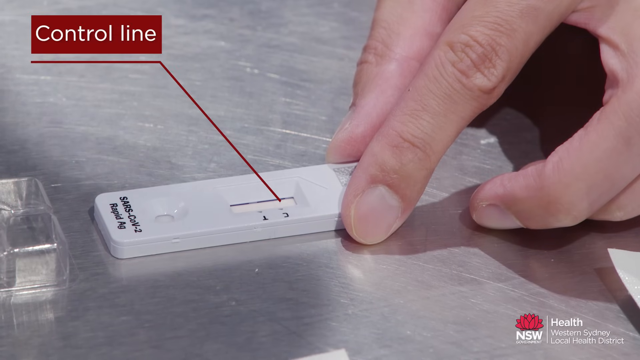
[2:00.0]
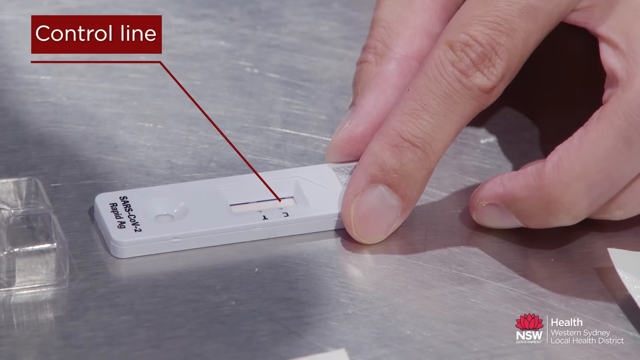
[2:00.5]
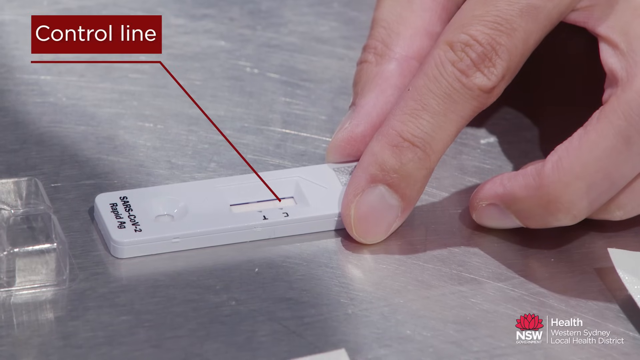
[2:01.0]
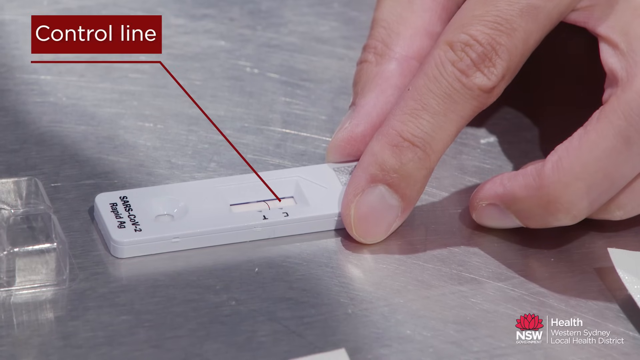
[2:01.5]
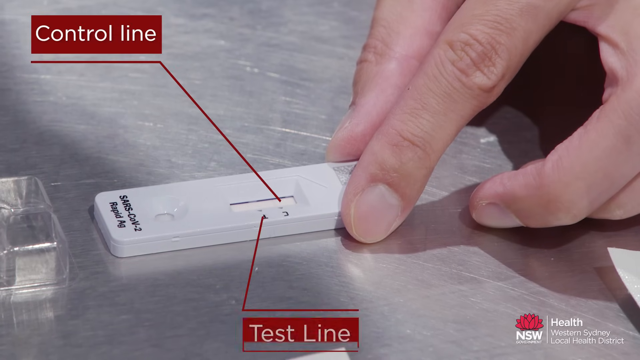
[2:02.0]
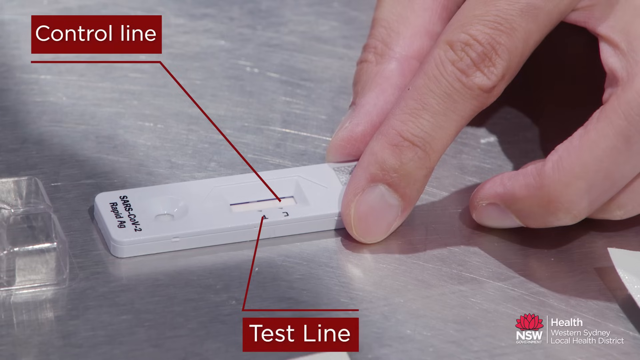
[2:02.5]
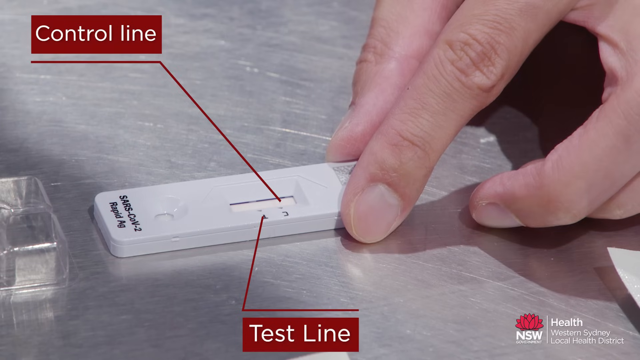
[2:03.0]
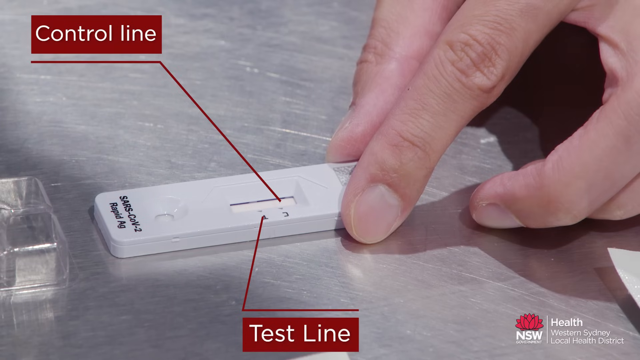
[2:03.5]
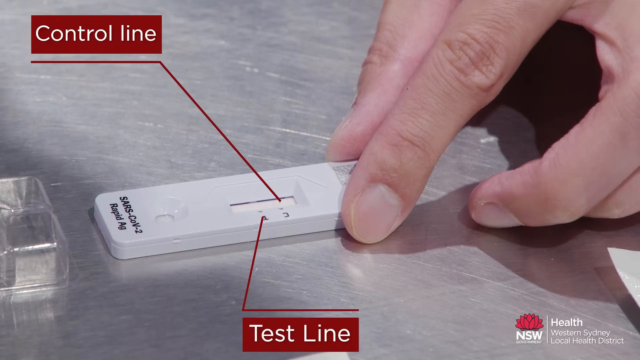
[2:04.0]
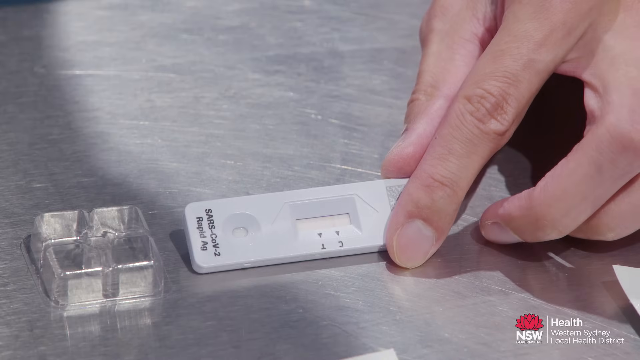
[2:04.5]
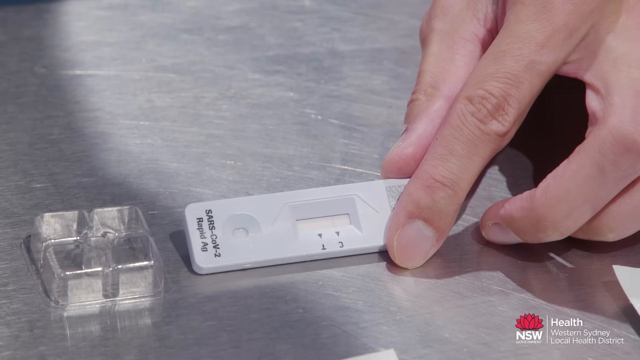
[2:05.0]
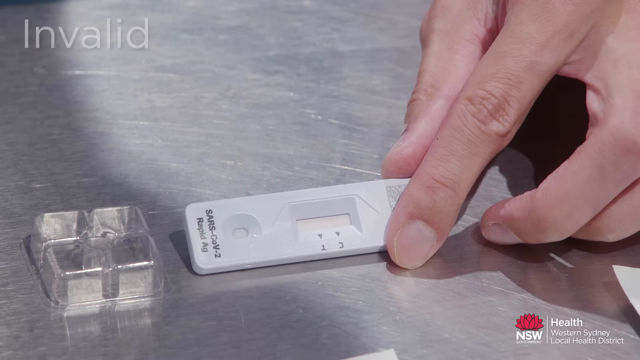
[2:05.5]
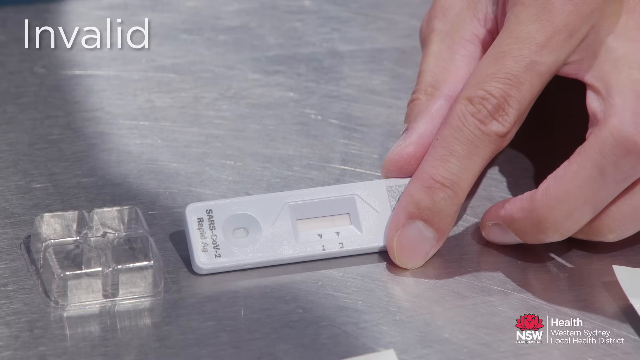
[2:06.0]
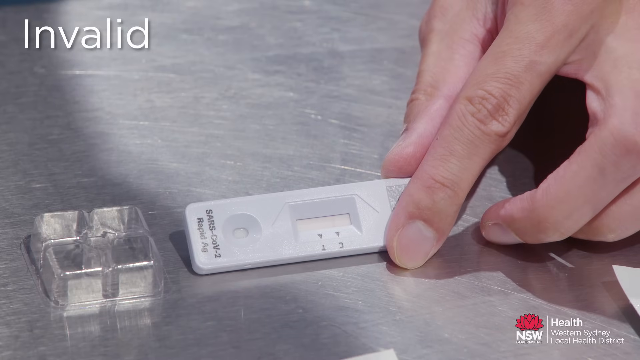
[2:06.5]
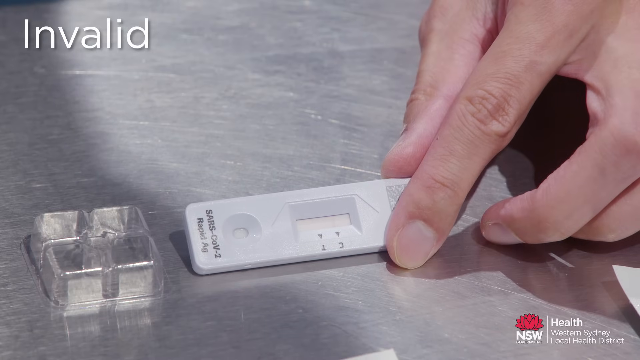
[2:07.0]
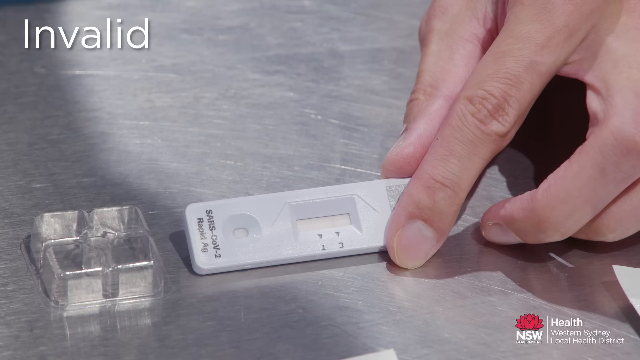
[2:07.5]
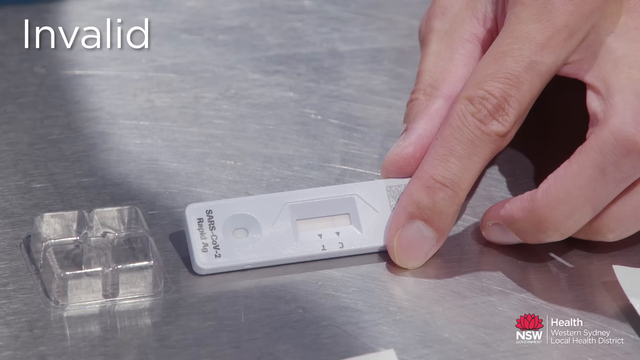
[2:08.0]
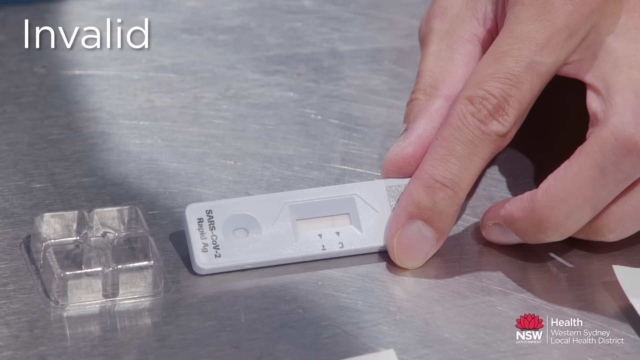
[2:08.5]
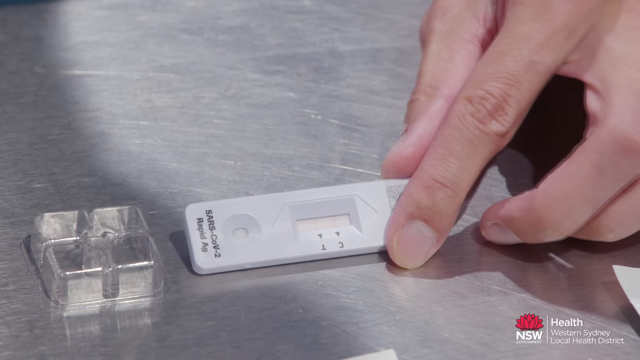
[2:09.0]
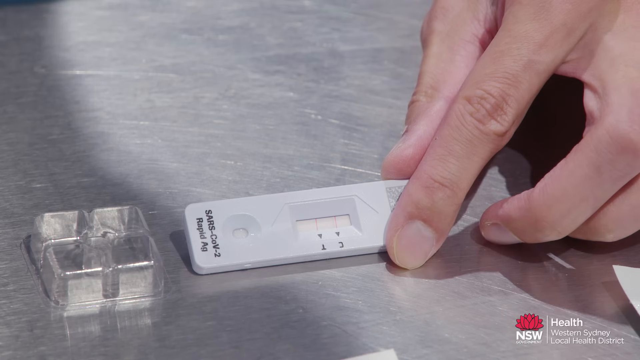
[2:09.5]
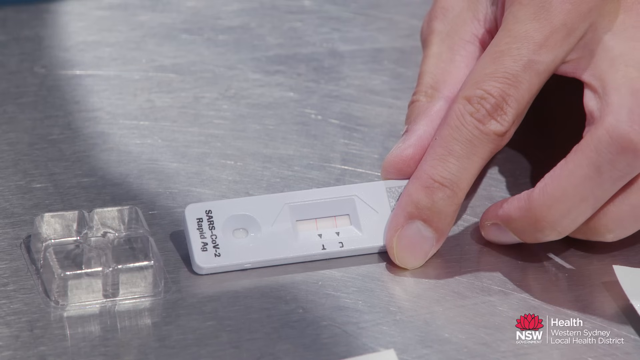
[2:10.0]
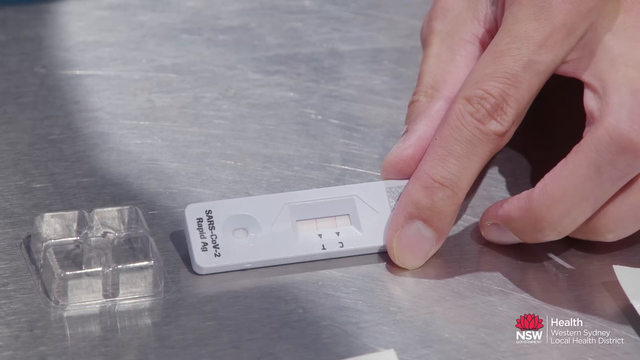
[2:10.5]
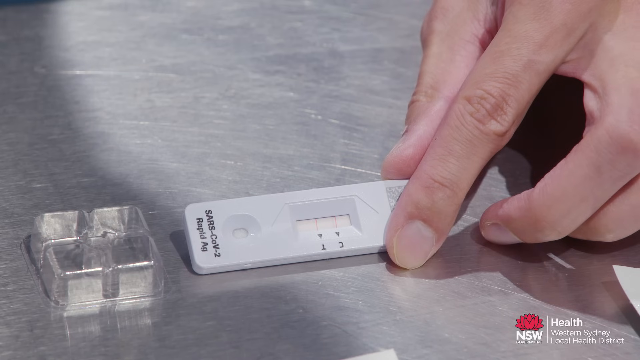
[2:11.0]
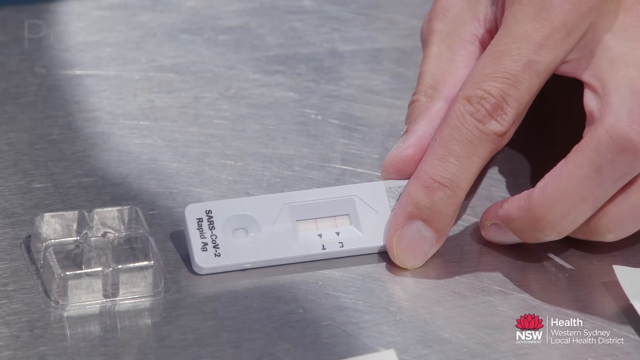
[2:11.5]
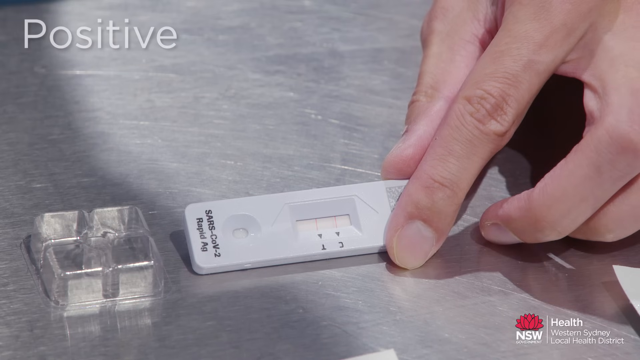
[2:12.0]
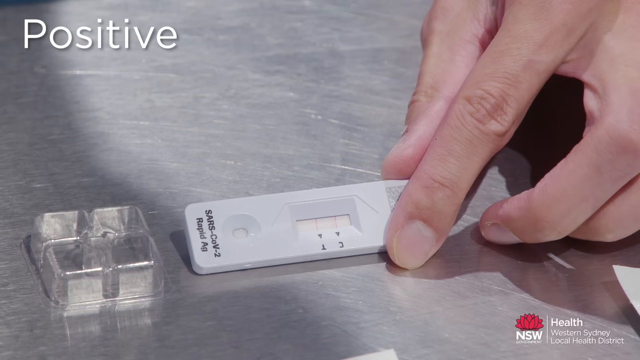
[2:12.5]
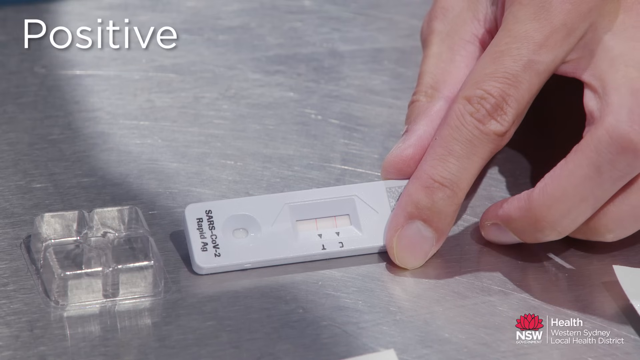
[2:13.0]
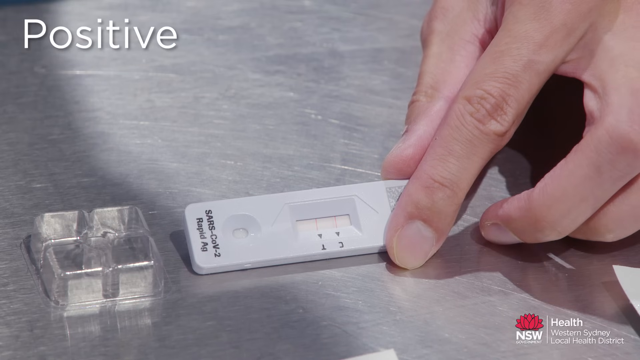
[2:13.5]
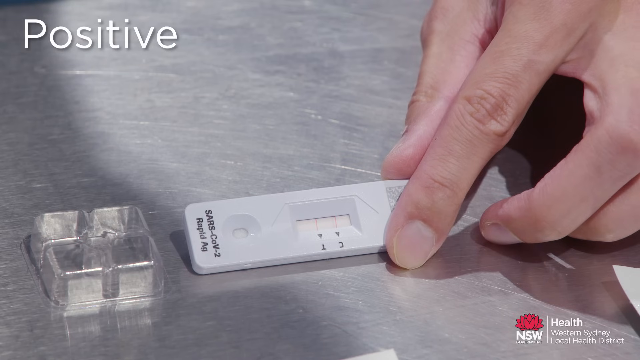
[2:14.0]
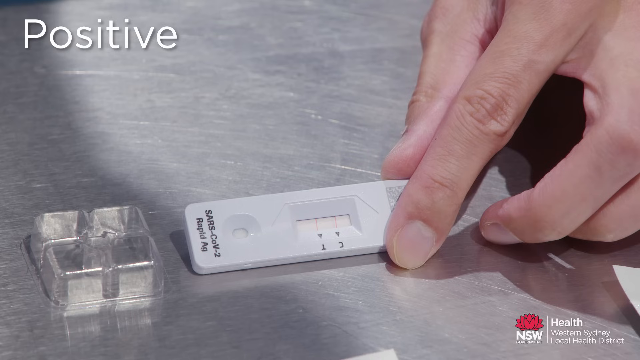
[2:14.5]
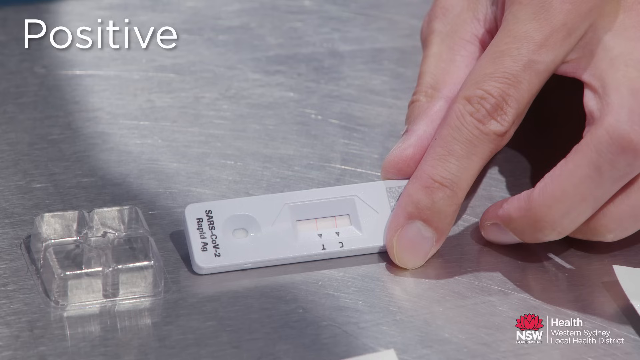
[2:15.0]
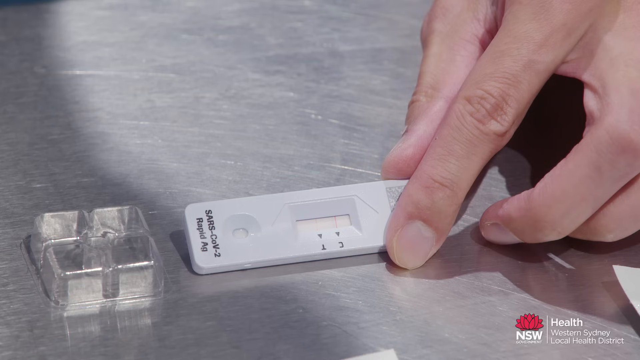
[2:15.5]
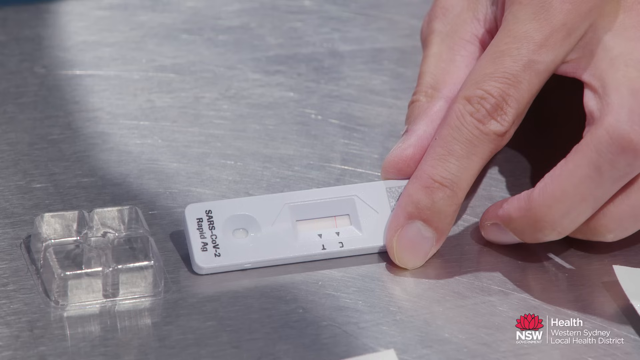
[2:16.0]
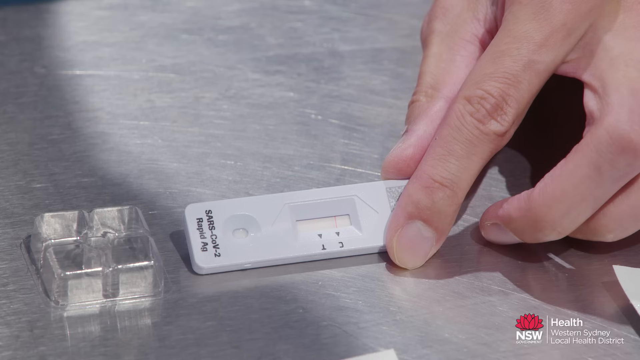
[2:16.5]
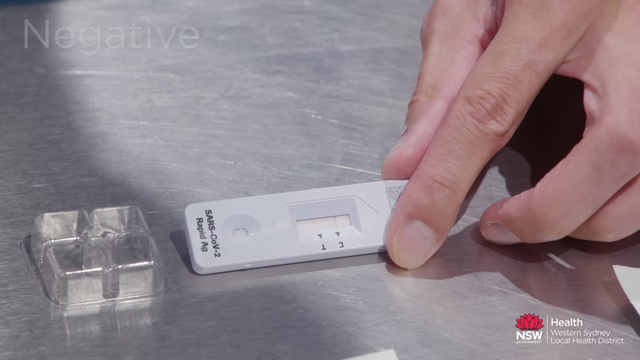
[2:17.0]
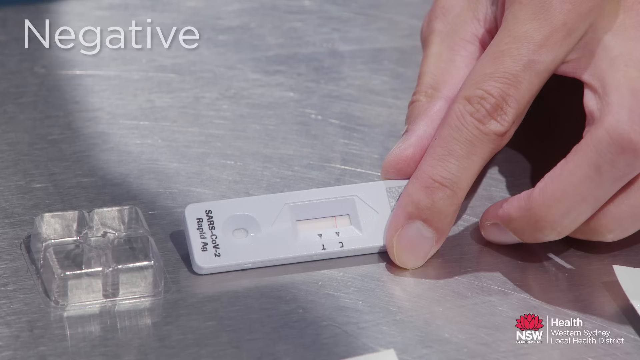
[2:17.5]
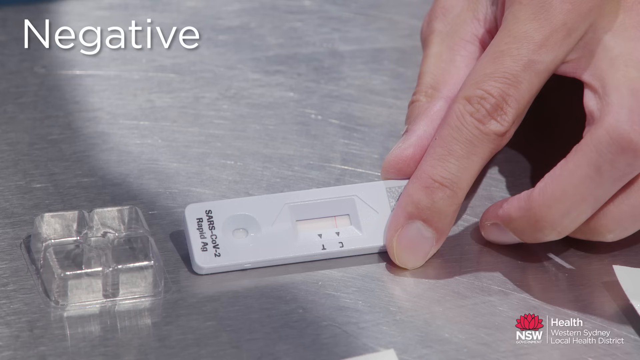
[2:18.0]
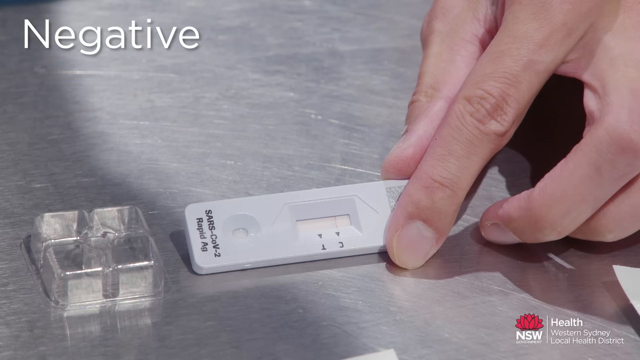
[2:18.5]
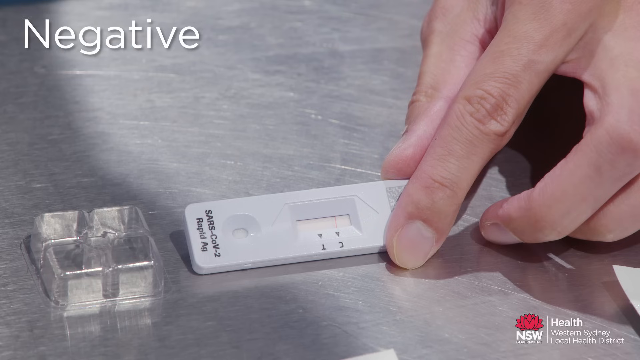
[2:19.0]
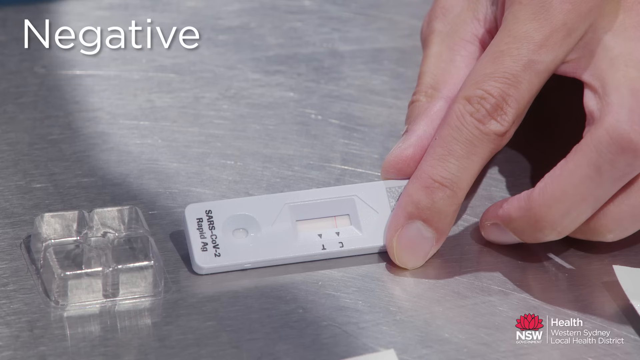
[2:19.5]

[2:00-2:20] A white test strip is on a metal table. The well where the drops go is shown, along with a red line pointing to the text "control line." The strip is marked with a "C" and a "T," and at the bottom it reads "SARS-COV-2 rapid AG." A pointer then indicates the test line, and the words "invalid," then "positive," then "negative" flash up on the screen. A white person's hand holds the strip with the index finger and thumb and tilts it forward toward the camera to show the marks where it shows positive and where it shows negative.